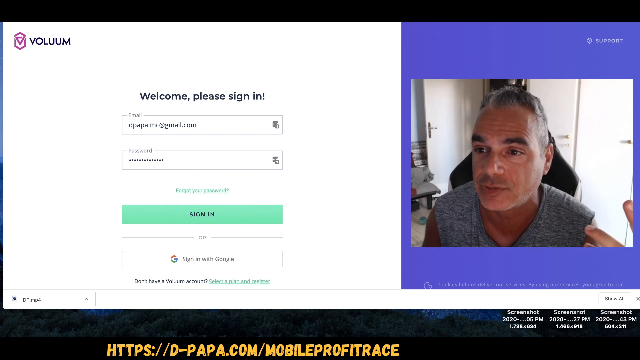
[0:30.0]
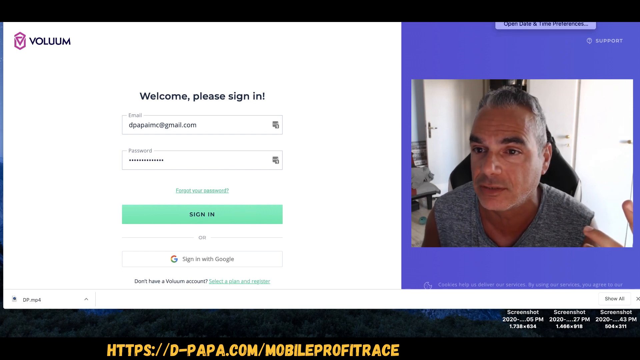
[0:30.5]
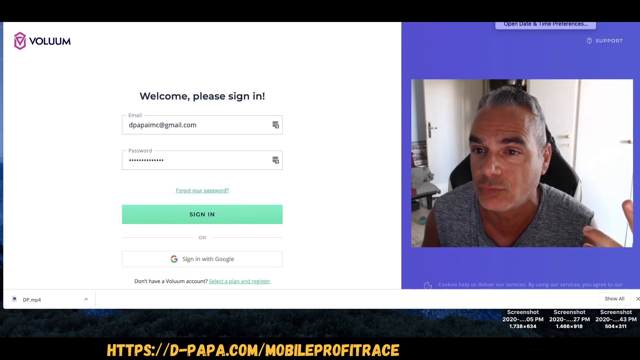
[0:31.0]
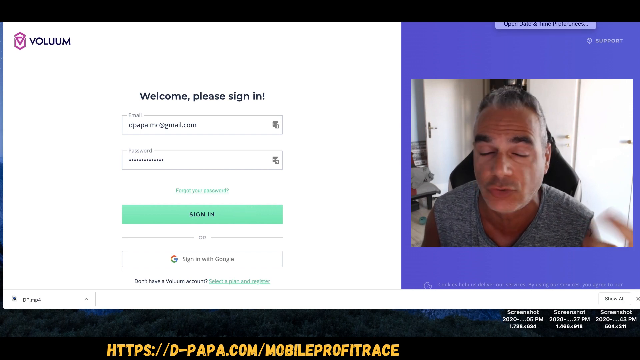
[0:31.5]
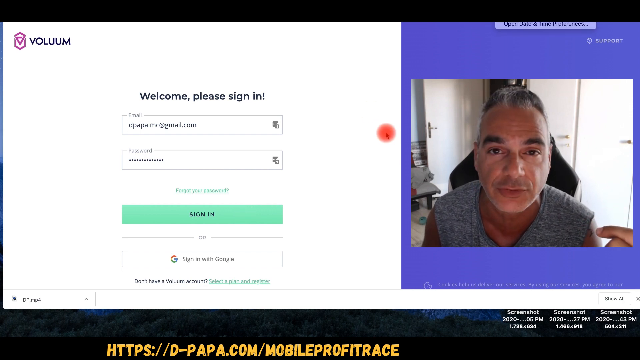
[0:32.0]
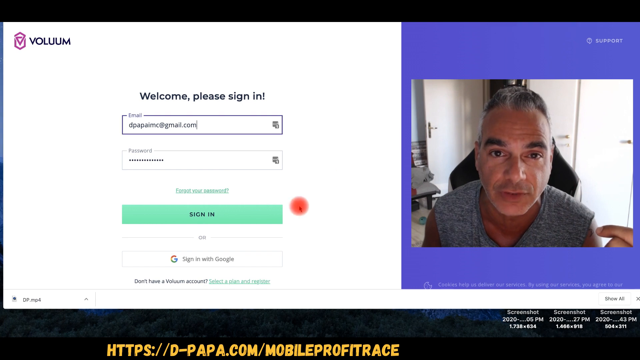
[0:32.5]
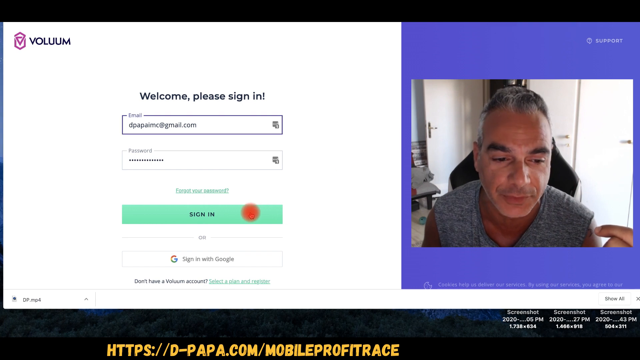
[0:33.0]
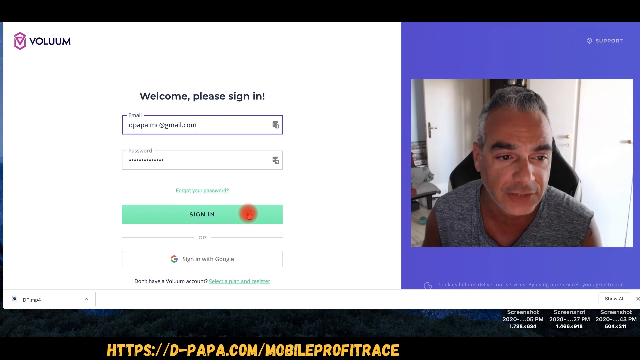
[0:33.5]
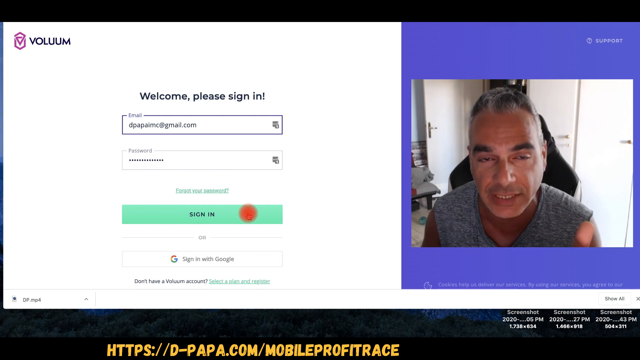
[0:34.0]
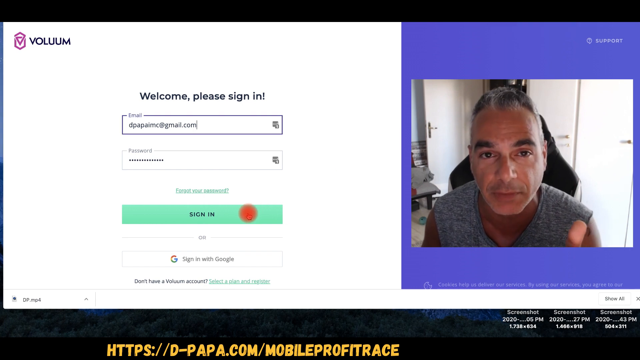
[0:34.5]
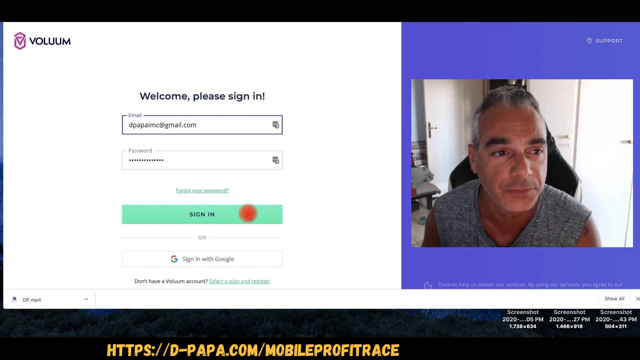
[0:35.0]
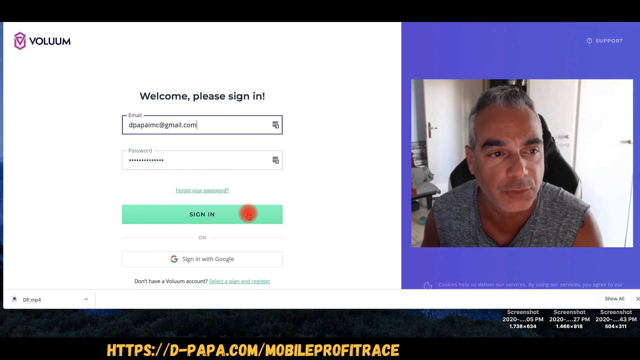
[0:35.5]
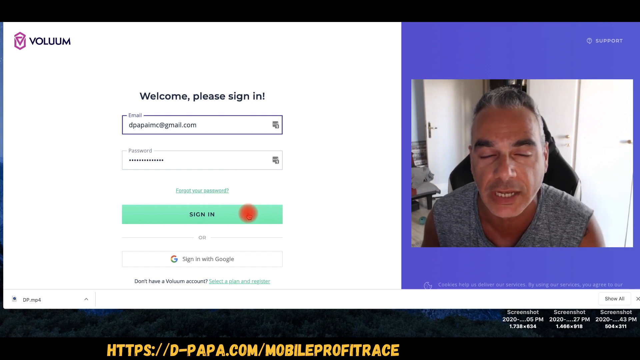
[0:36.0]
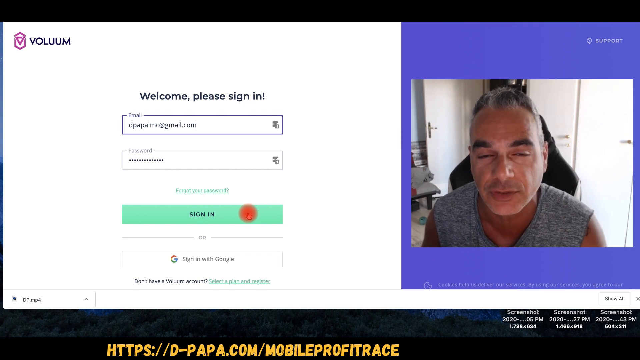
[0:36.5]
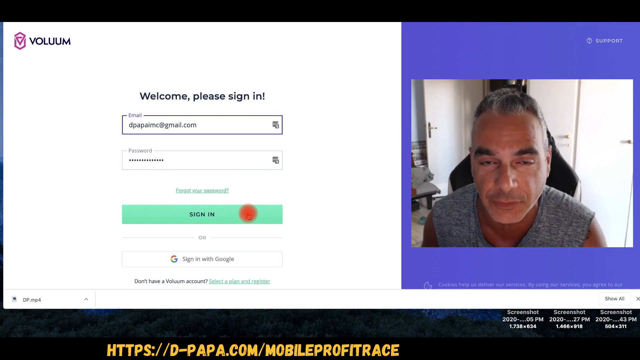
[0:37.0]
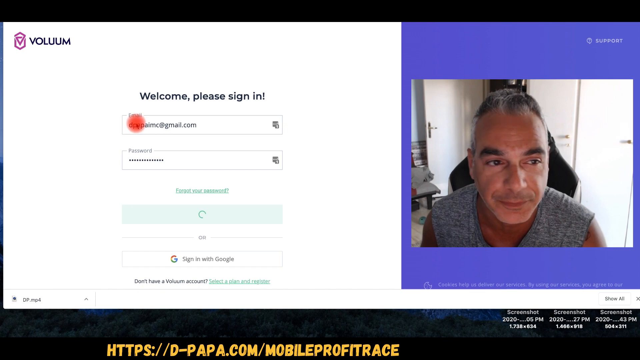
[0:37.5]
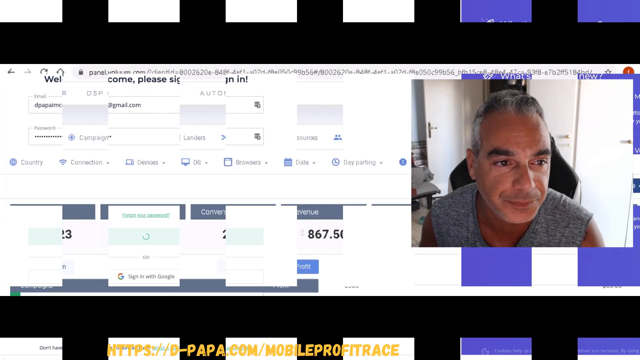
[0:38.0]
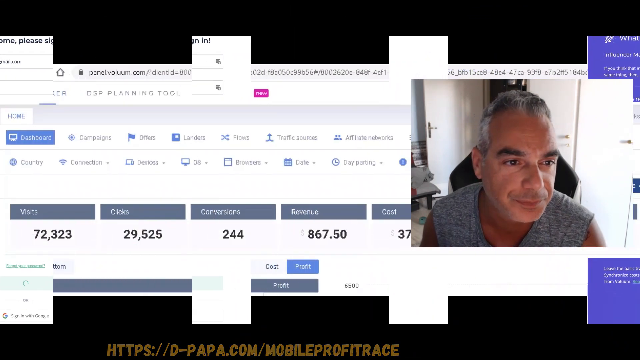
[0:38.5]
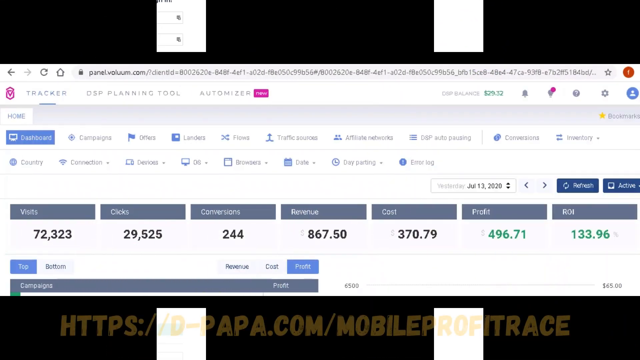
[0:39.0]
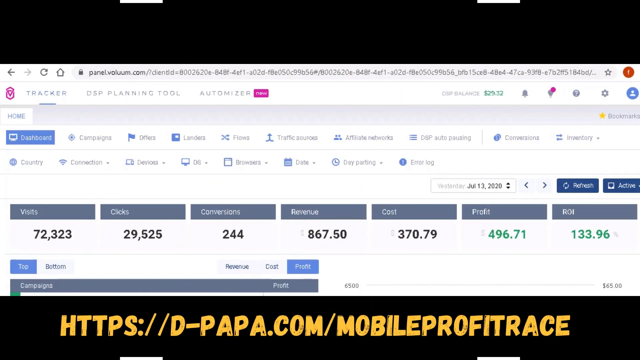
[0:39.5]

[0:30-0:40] The sign-in screen of a piece of software called Volume is on the left, with a webcam view of a man on the right. He talks and demonstrates something on the left-hand side of the screen. A big red illuminated ball marks the cursor, hovering over the sign-in call-to-action button. The button is clicked, and the image breaks up into little squares, disappears and transitions into a piece of software. The web address reads "panel.volume.com". Underneath are three tabs, "tracker", "DSP planning tool" and "atomizer", and below them a number of different menu headers.